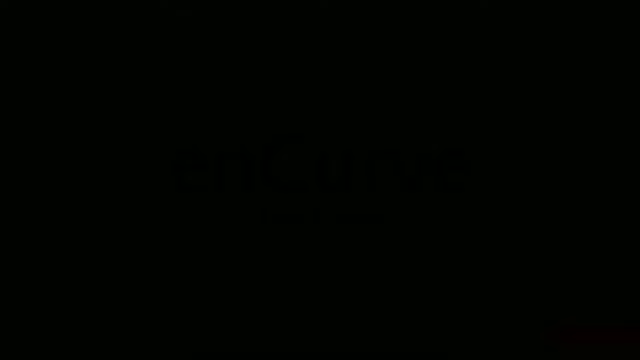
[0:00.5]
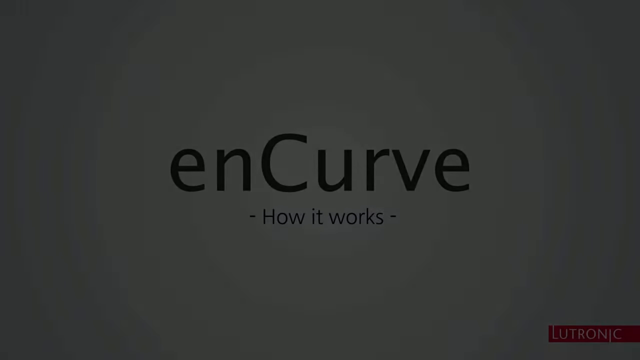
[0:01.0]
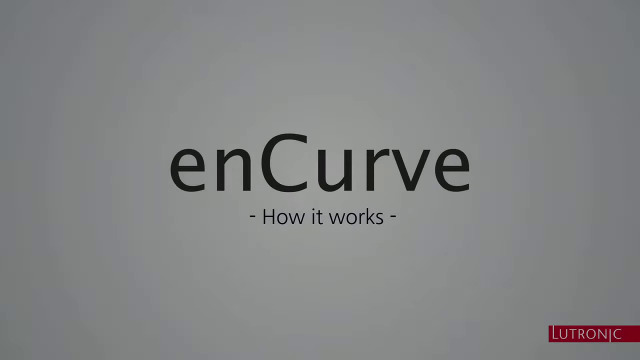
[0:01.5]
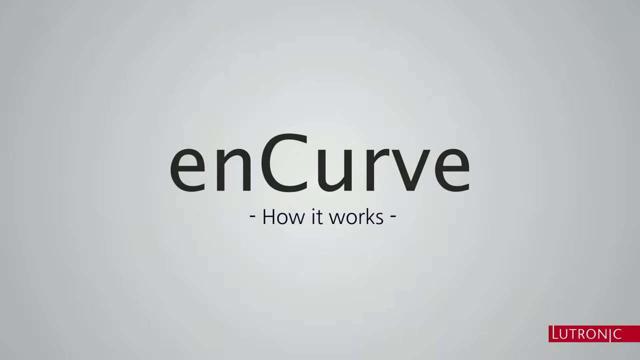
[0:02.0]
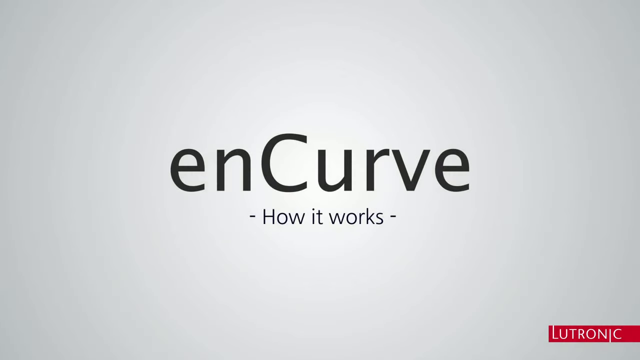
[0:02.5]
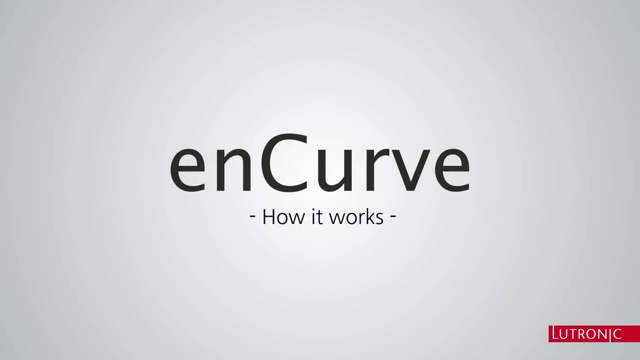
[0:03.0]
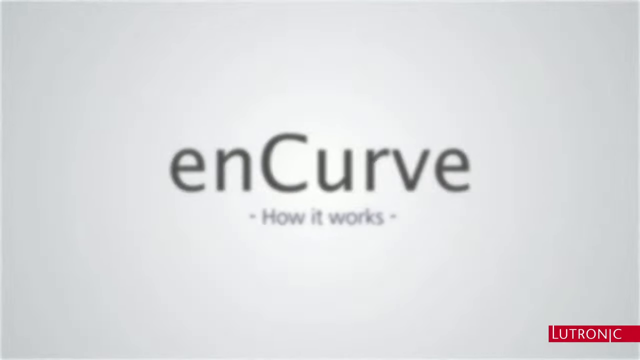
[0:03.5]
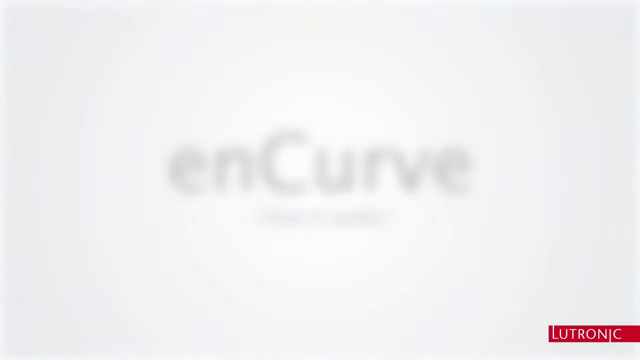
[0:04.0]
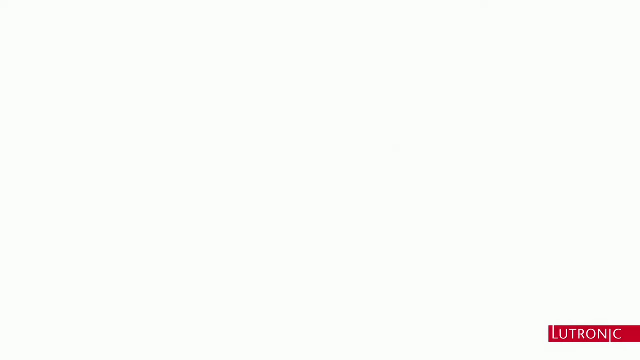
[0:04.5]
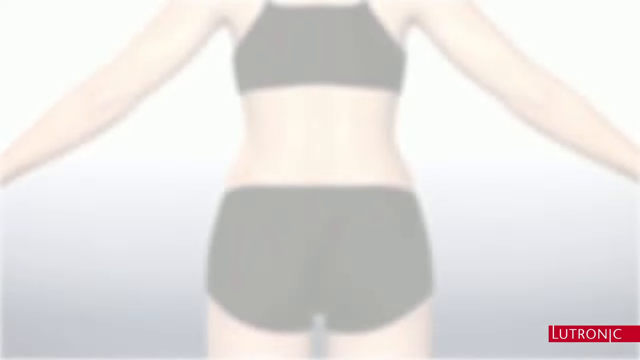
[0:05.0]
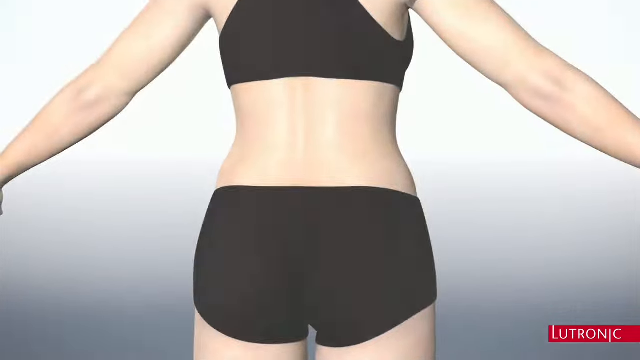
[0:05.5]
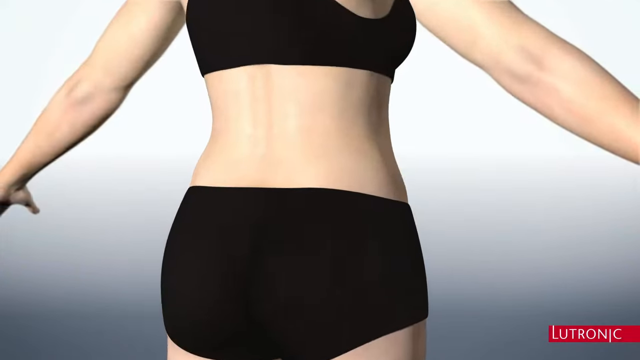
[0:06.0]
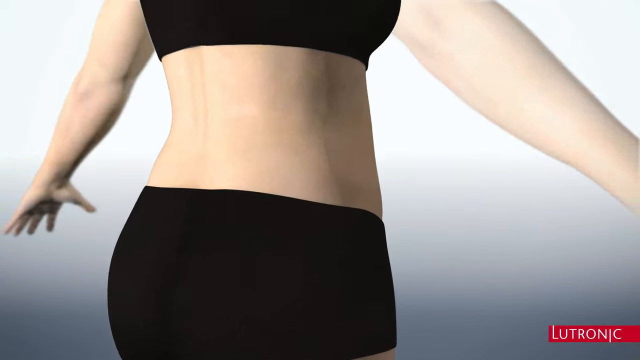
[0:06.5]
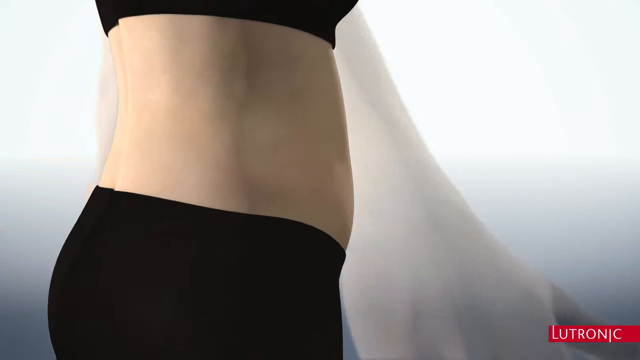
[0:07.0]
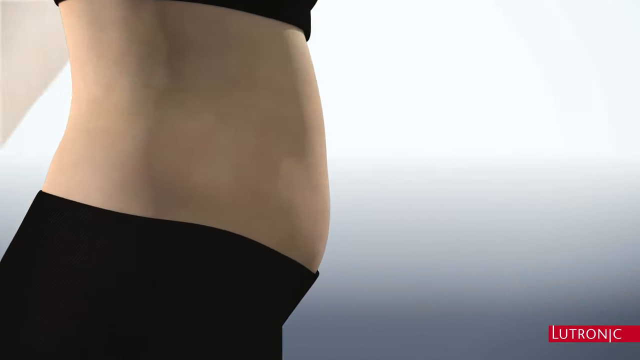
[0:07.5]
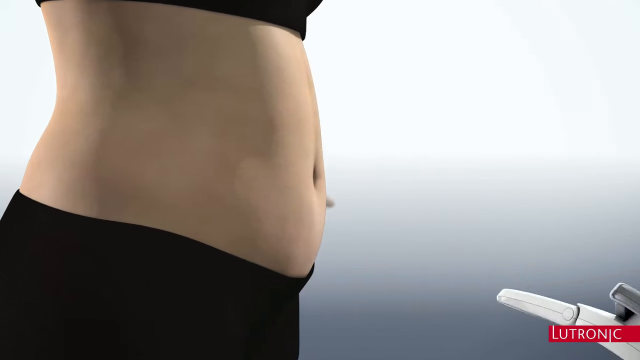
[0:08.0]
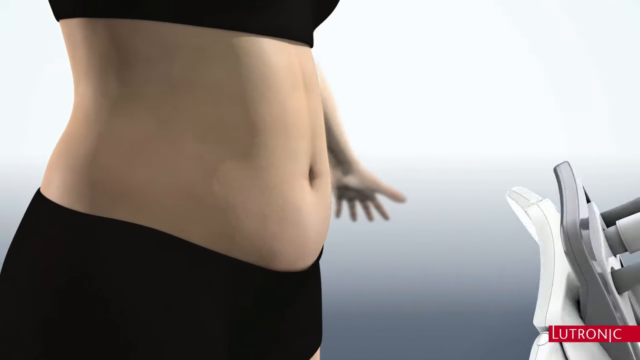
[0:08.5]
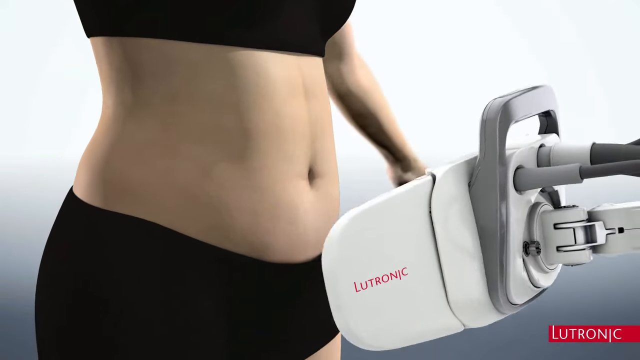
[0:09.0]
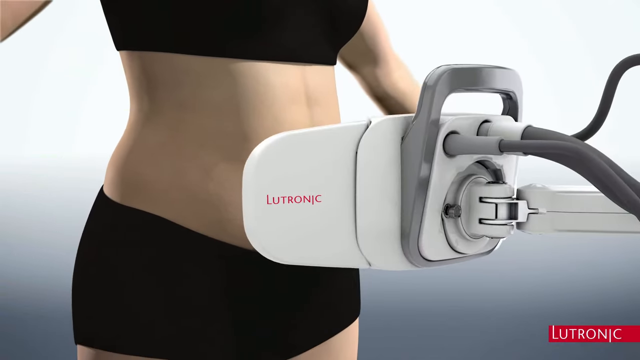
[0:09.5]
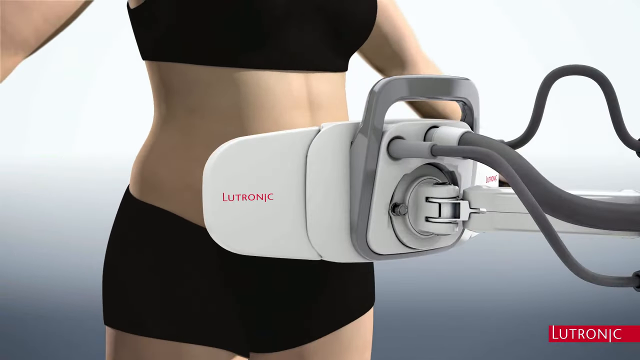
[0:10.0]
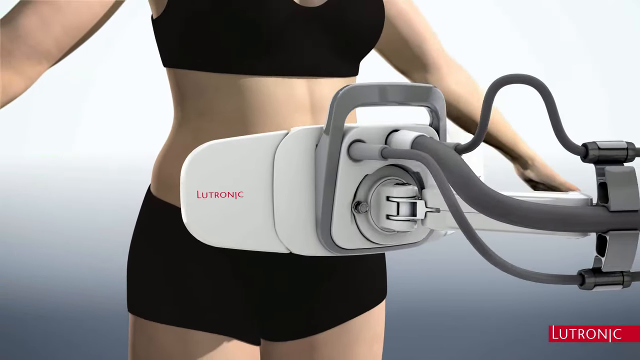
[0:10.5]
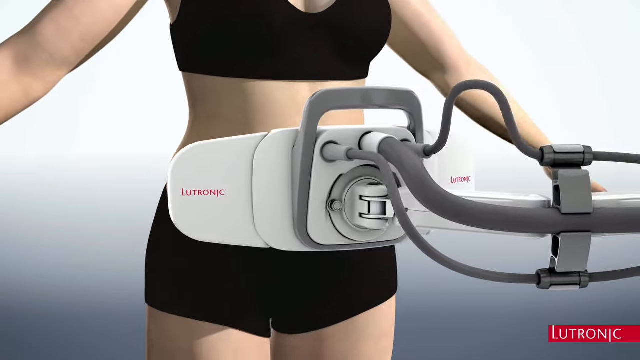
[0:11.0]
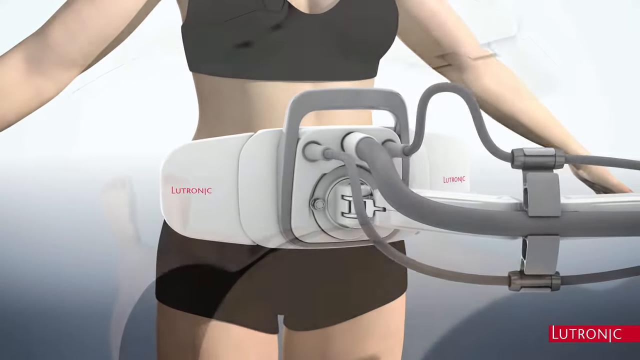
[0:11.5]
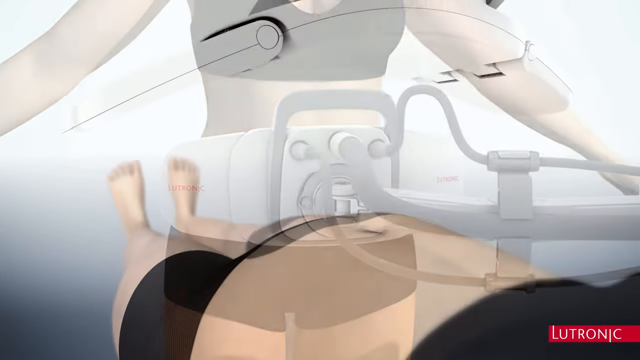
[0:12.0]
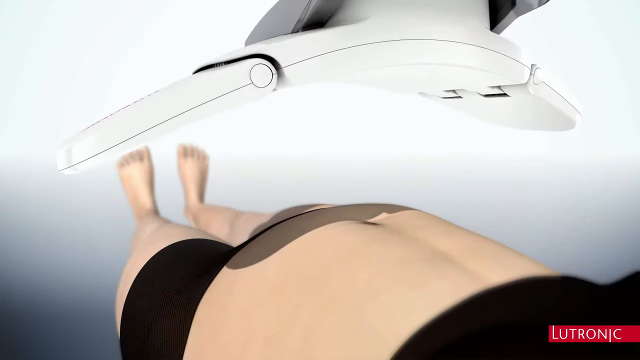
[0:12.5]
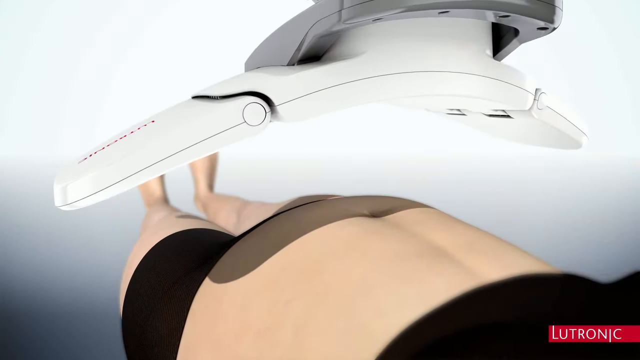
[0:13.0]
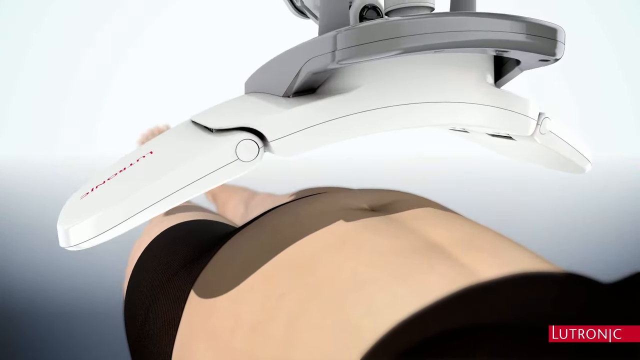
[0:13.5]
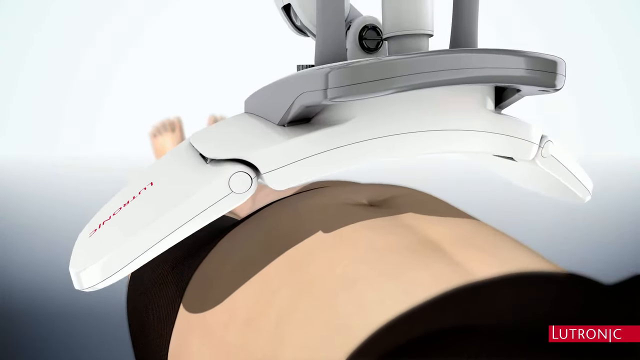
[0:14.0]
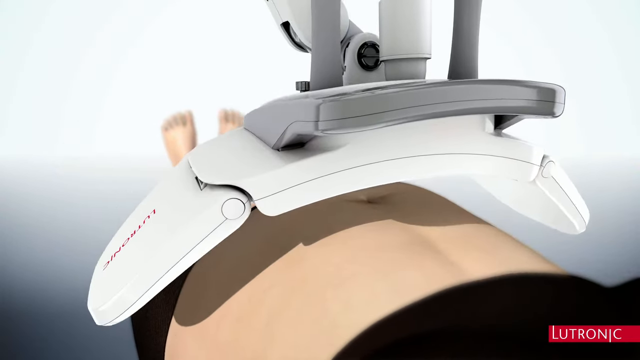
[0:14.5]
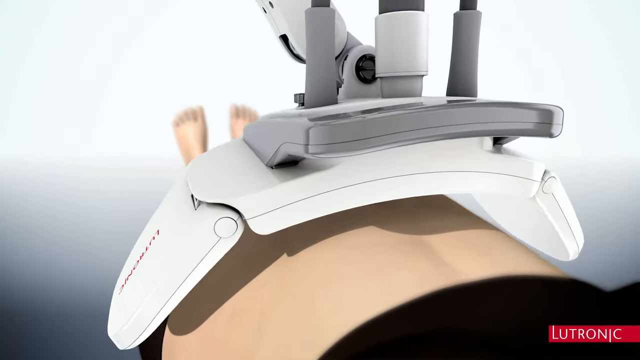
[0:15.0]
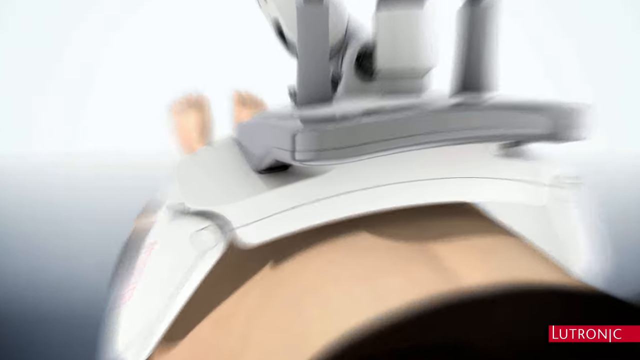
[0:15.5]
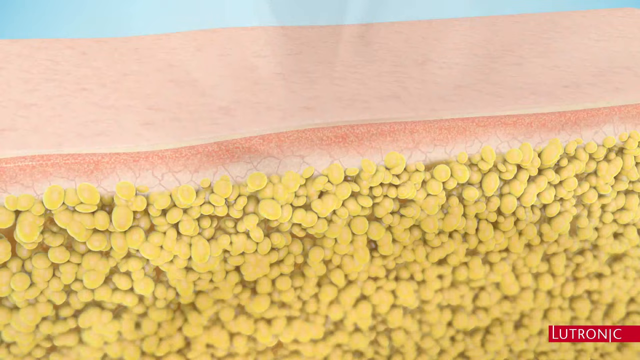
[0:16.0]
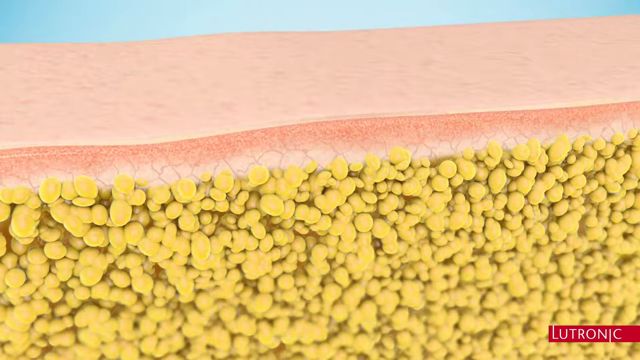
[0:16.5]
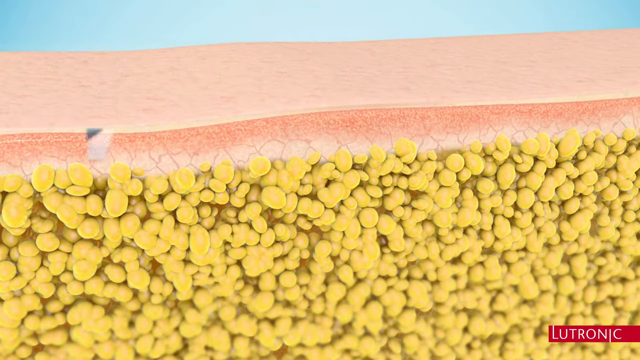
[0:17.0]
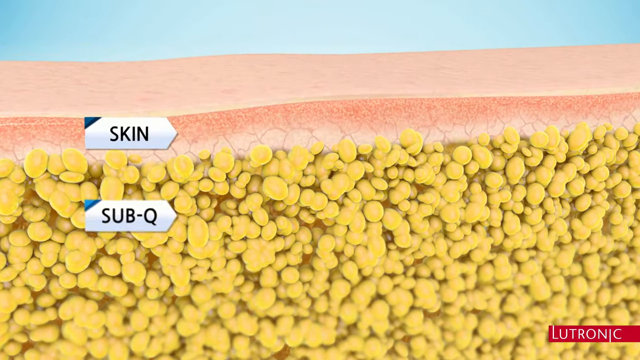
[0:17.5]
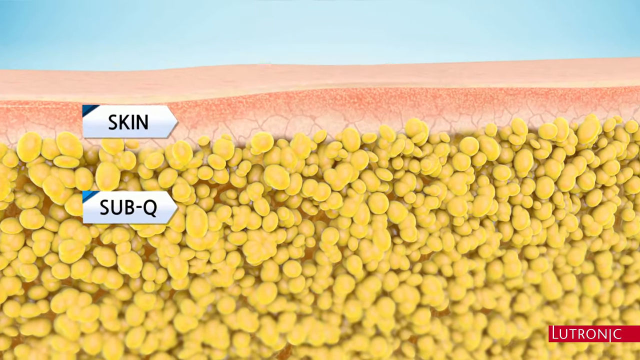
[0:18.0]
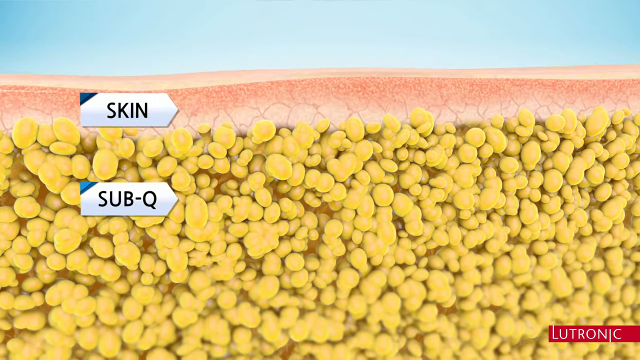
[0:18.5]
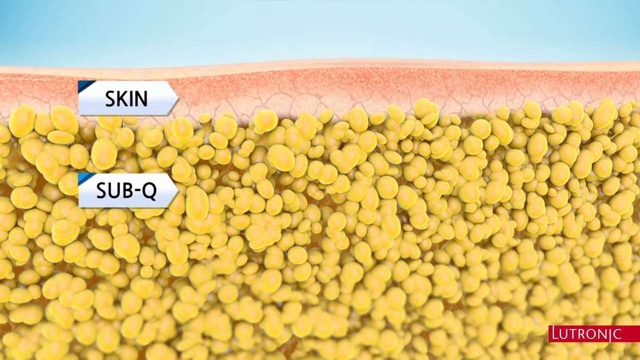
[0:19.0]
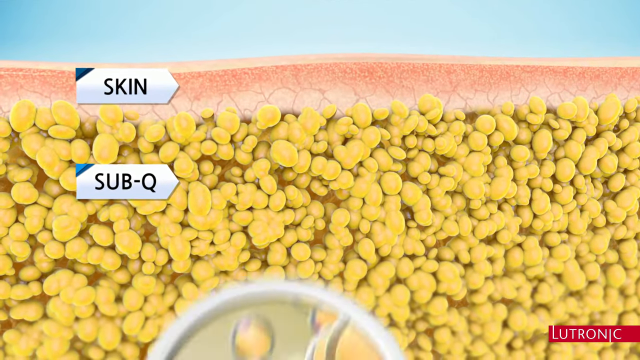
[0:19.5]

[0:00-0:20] The video opens with slides naming a product or medical procedure called En-Curve, with a slogan about how to make better curves. A slide shows adipose tissue, with big blobs of fat cells under the skin in the sub-Q section. Something that looks like a temperature gauge or thermometer shows the body's temperature and the sub-Q fat level, with a temperature that looks to be over 100 degrees Fahrenheit, maybe over 104.